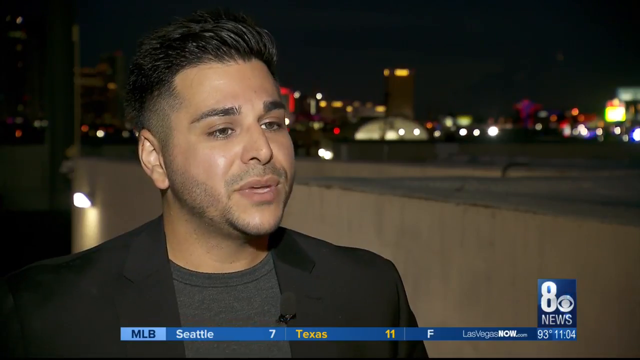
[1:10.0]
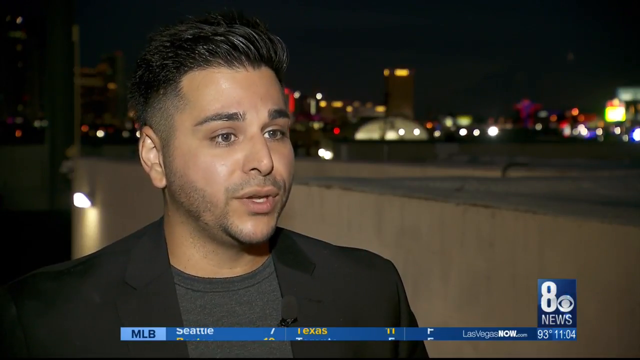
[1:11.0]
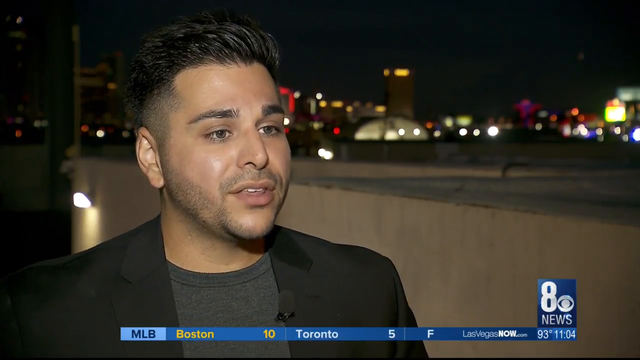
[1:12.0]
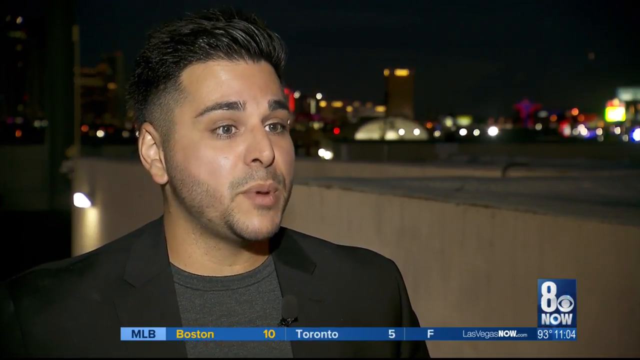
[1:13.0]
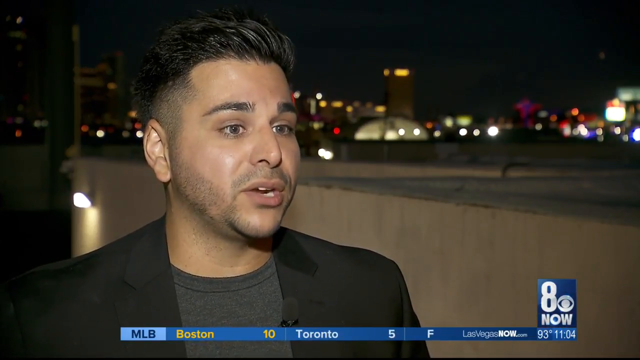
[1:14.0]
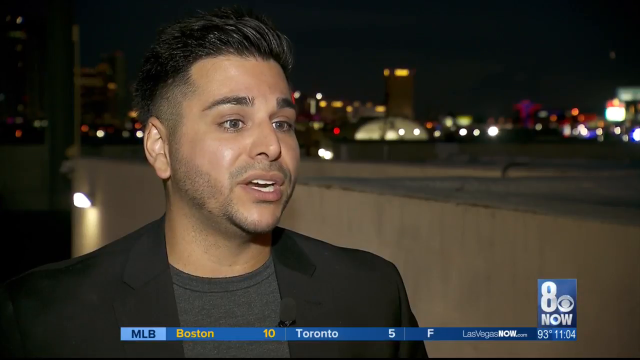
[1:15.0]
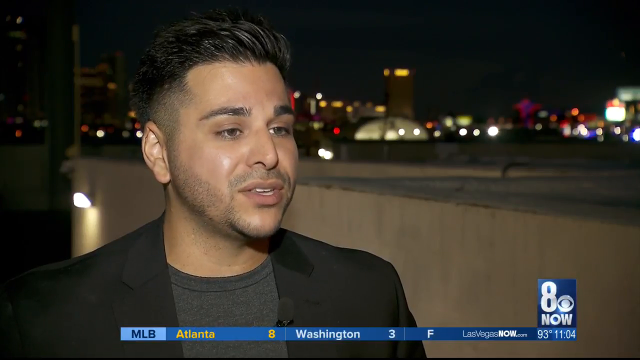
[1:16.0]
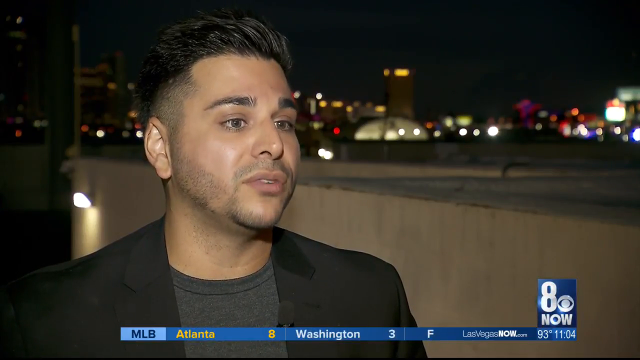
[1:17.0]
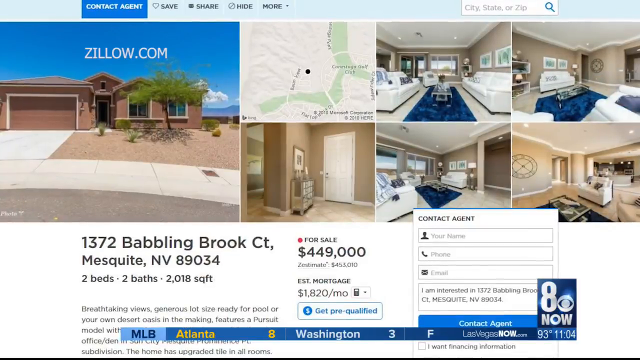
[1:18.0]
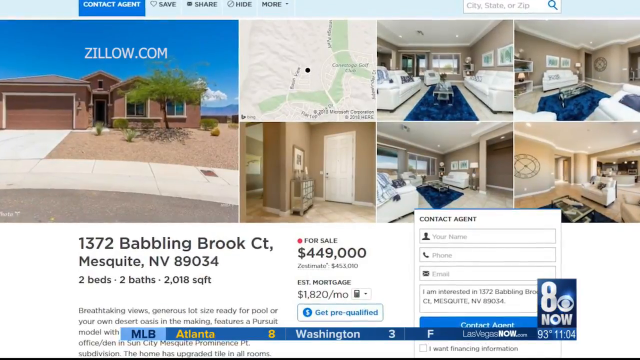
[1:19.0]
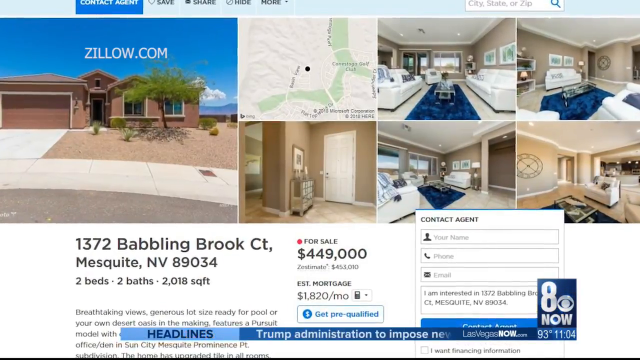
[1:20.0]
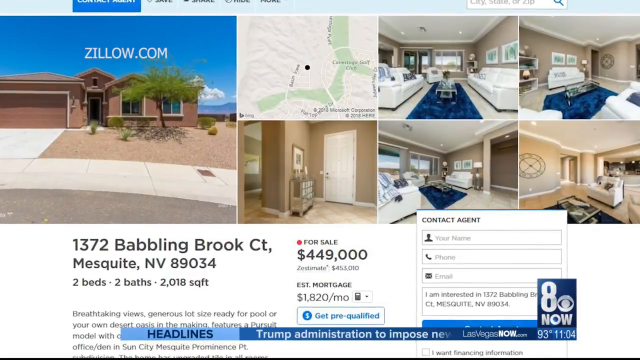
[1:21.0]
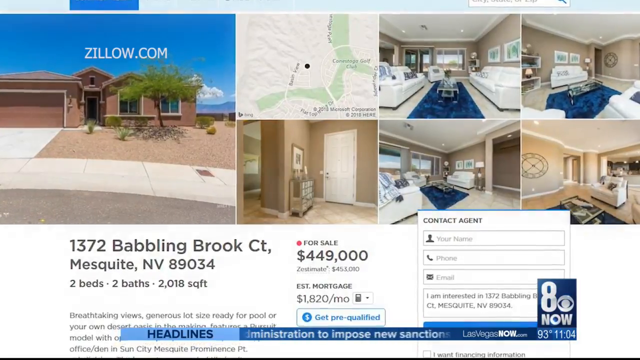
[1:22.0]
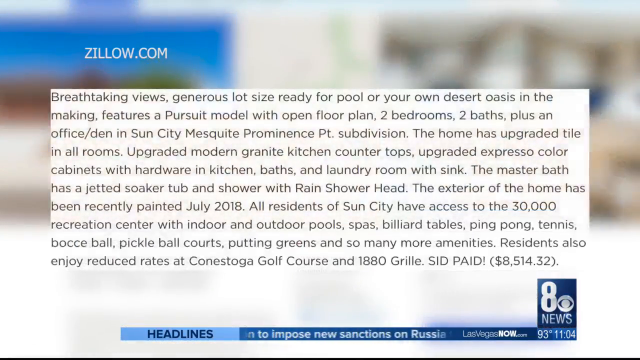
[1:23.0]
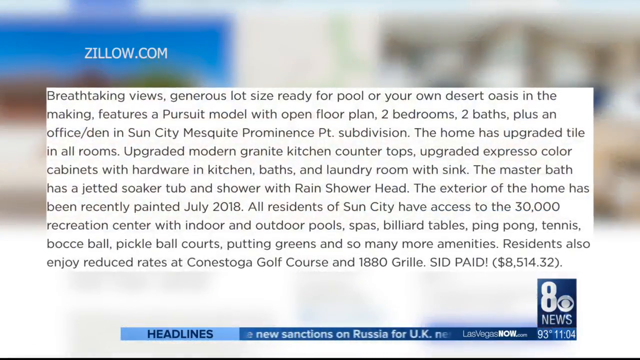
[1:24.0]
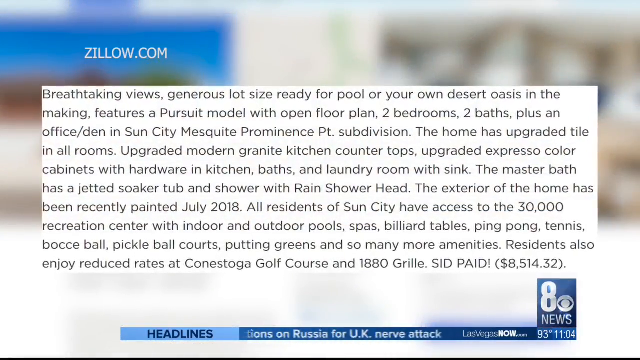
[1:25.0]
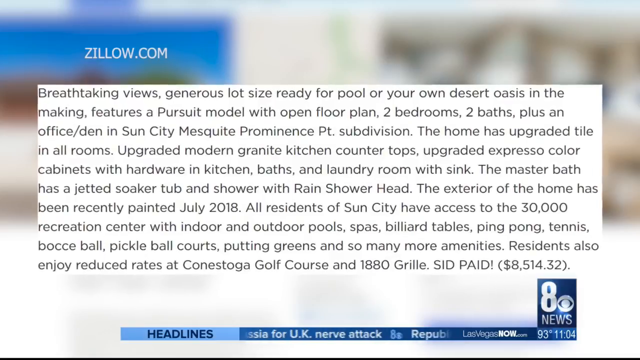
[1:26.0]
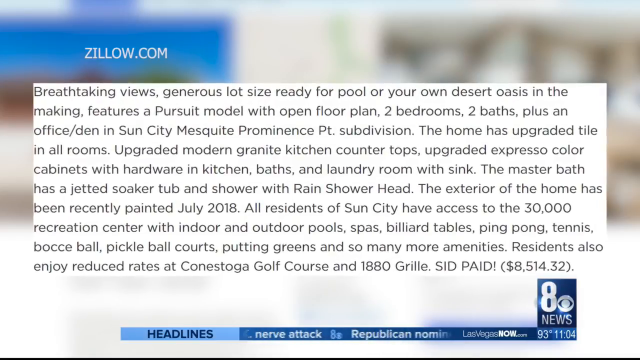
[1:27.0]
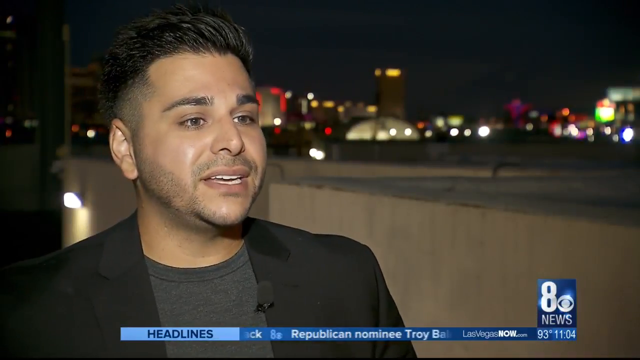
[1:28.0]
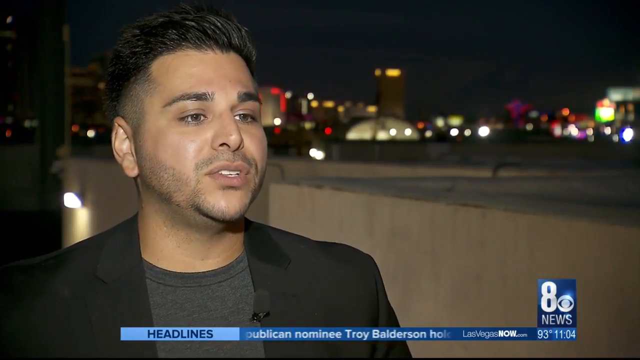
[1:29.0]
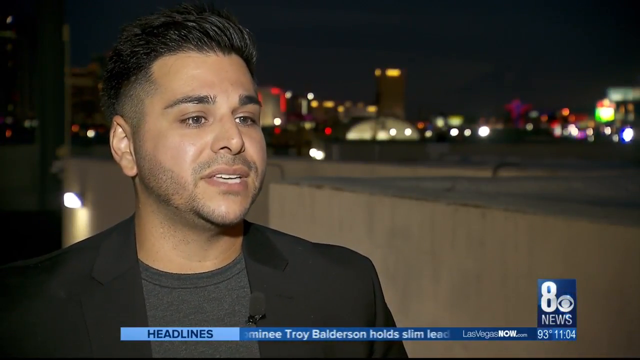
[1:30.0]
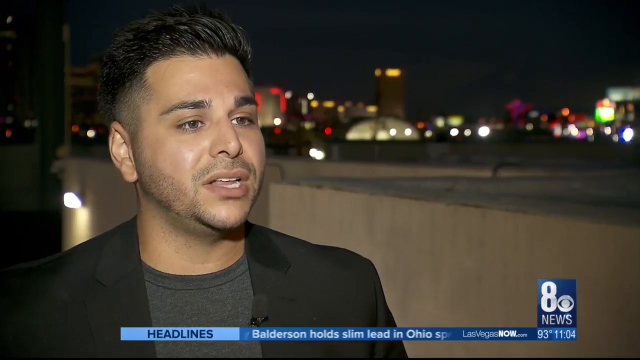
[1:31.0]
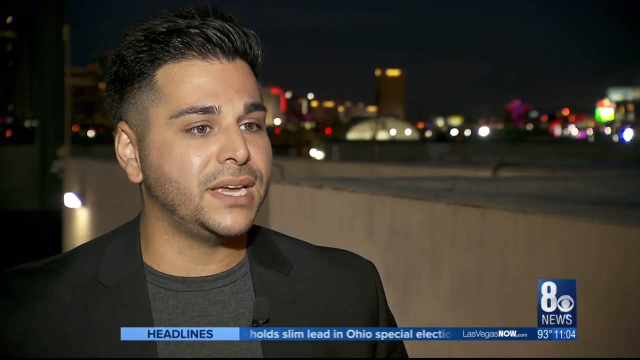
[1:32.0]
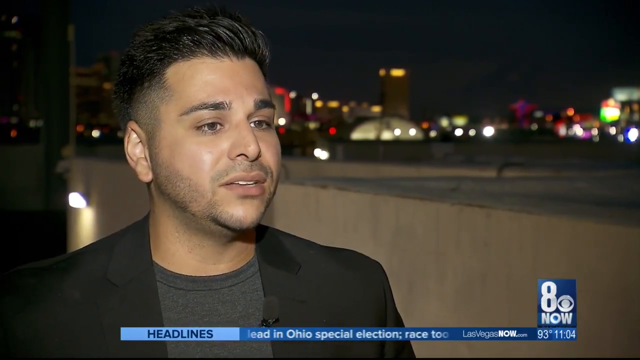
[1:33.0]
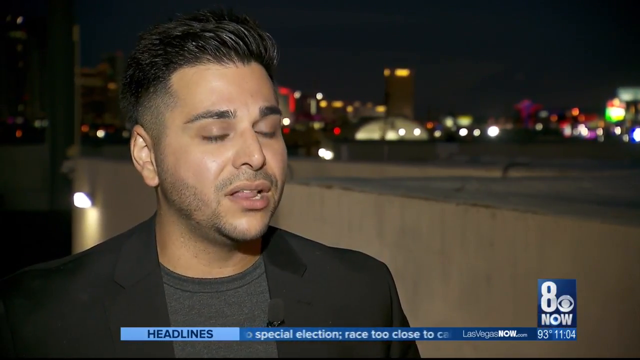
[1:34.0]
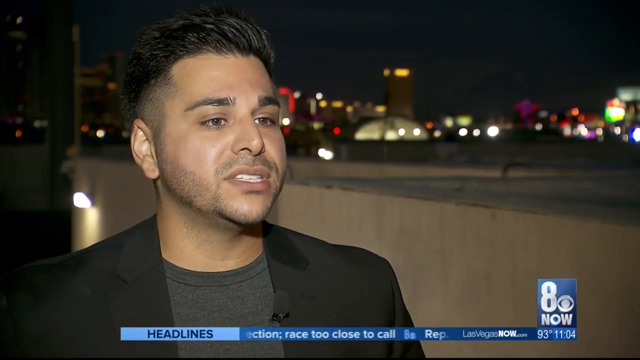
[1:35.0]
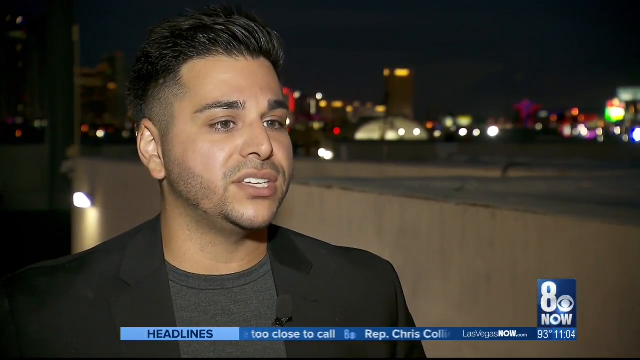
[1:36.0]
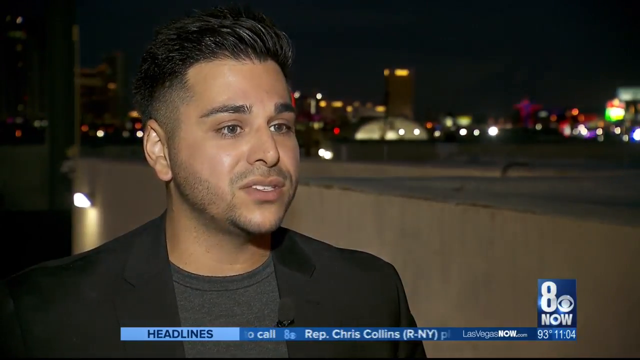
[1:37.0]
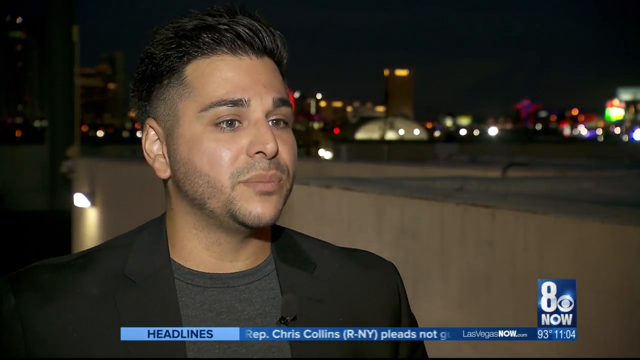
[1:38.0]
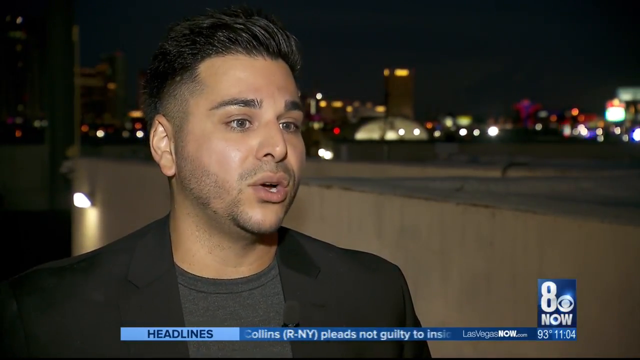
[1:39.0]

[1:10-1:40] Zah speaks to the reporter. The video moves to zillow.com, showing the house for sale at 1372 Bubbling Brook, Mesquite, Nevada: a two-bed, two-bath house priced at $449,000, with an estimated mortgage of $1,800 per month and a section that says "contact agent". Then a cutout of text appears on screen, including "breathtaking views generous lot size", "two bedrooms two baths plus an office in sun city mesquite prominence subdivision", "upgraded modern granite kitchen countertops", "upgraded espresso color cabinets with hardware in kitchen baths and laundry room with sink" and "the master bath has a jetted soaker tub and shower with rain shower head", along with much more information.